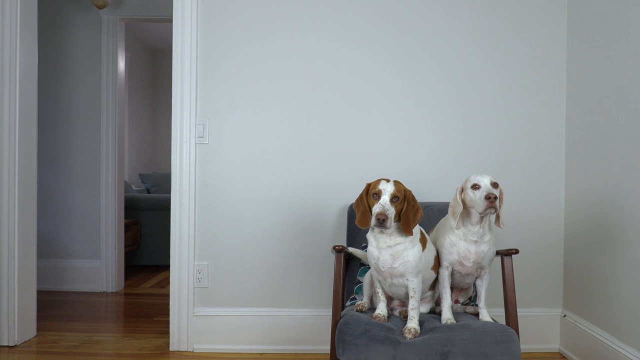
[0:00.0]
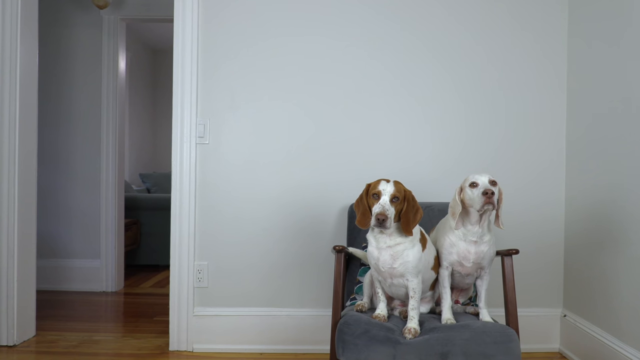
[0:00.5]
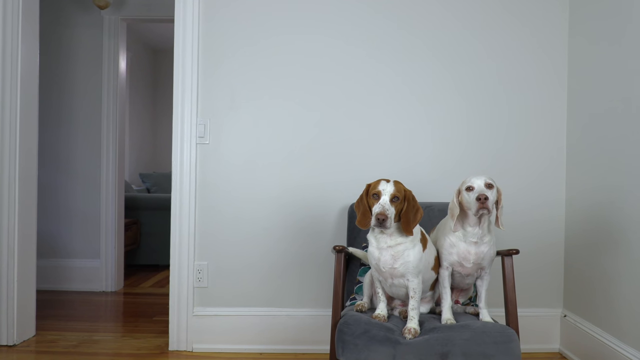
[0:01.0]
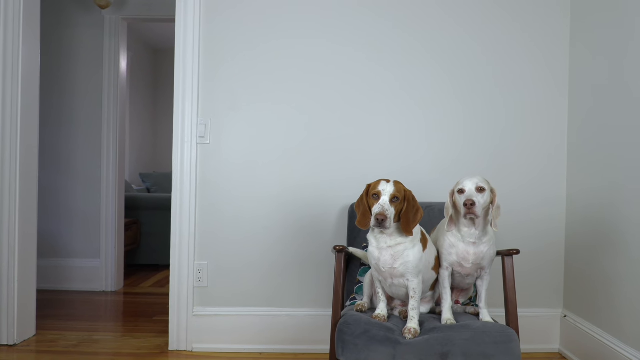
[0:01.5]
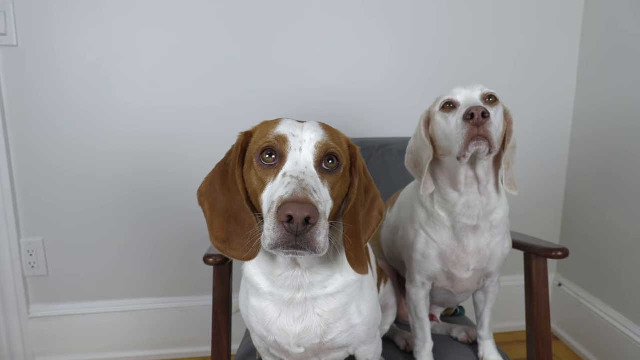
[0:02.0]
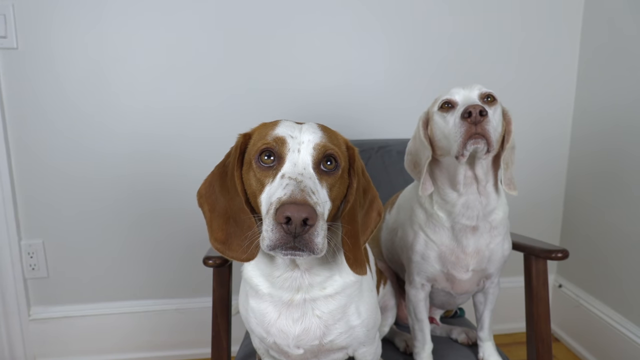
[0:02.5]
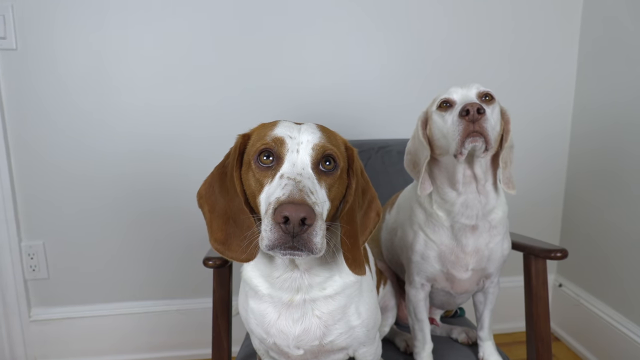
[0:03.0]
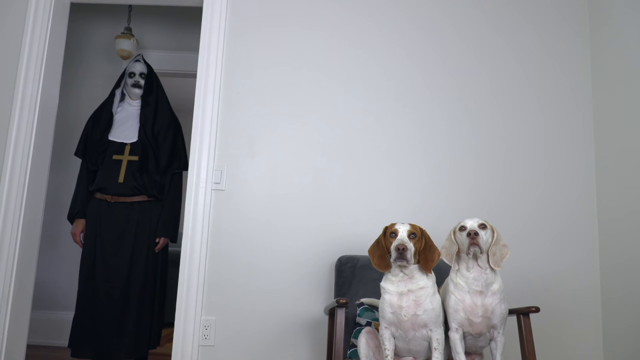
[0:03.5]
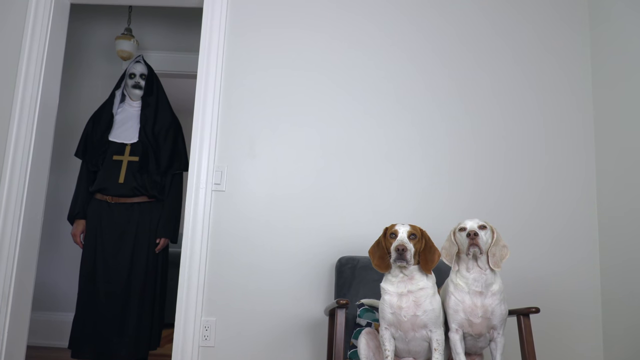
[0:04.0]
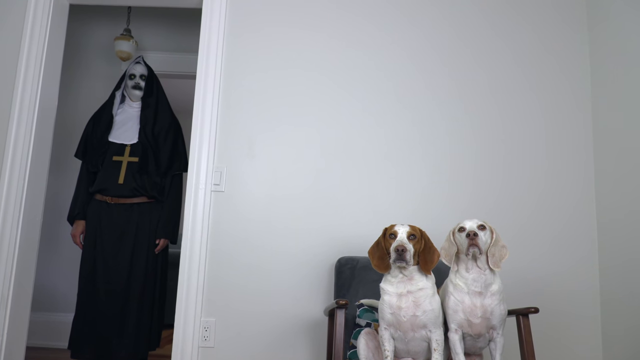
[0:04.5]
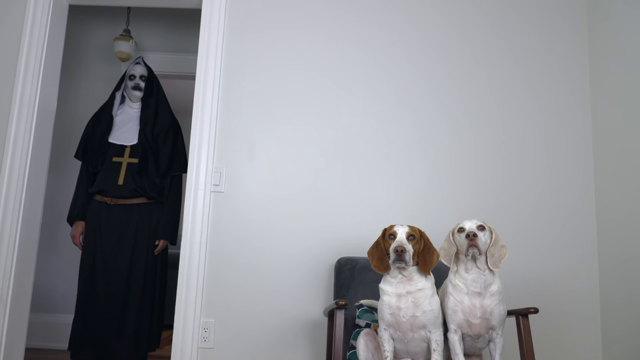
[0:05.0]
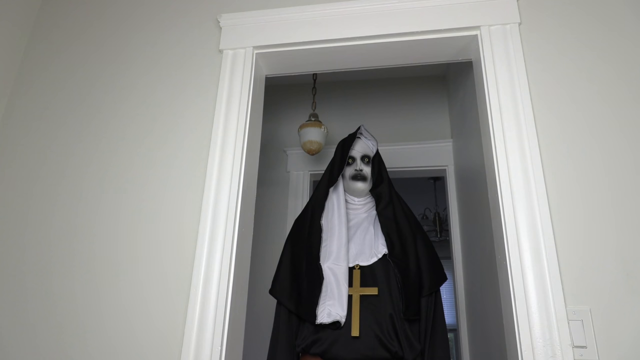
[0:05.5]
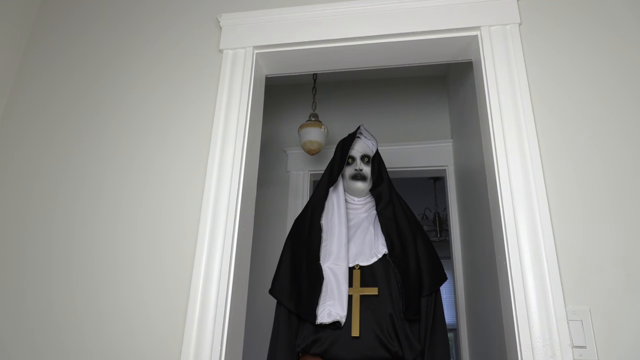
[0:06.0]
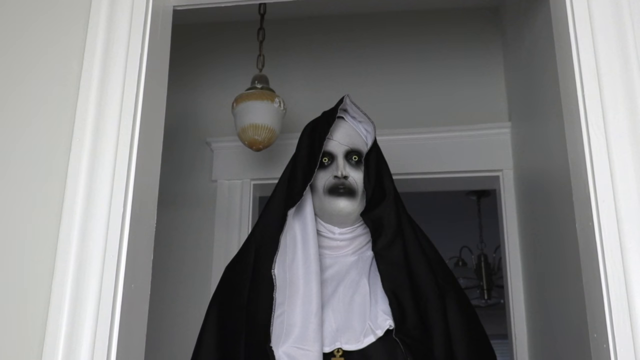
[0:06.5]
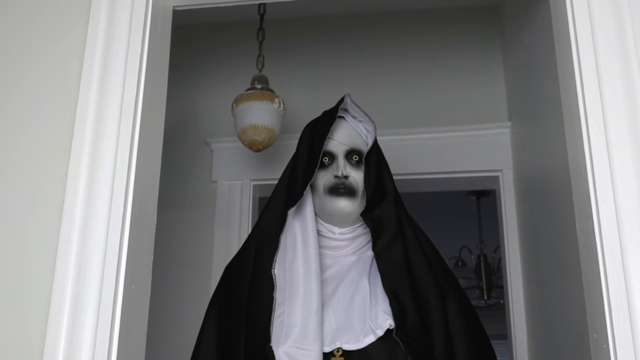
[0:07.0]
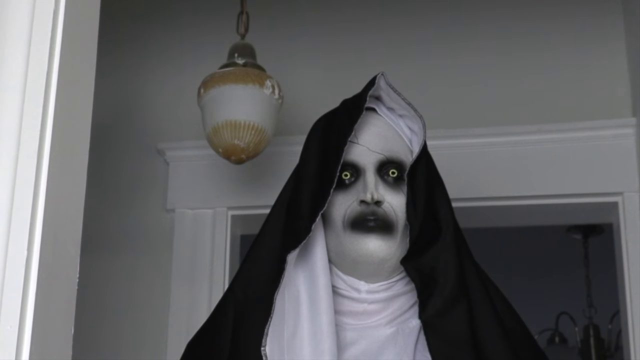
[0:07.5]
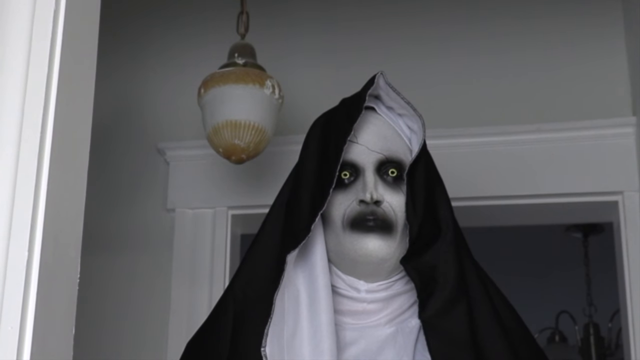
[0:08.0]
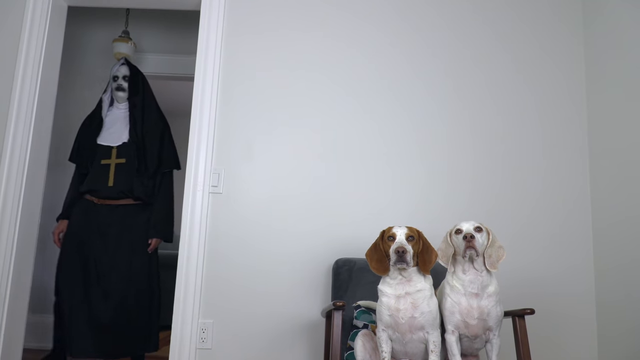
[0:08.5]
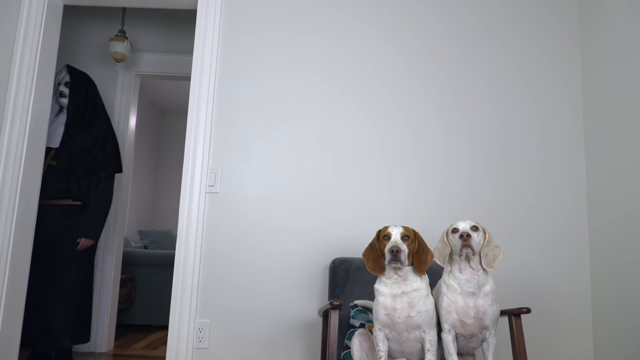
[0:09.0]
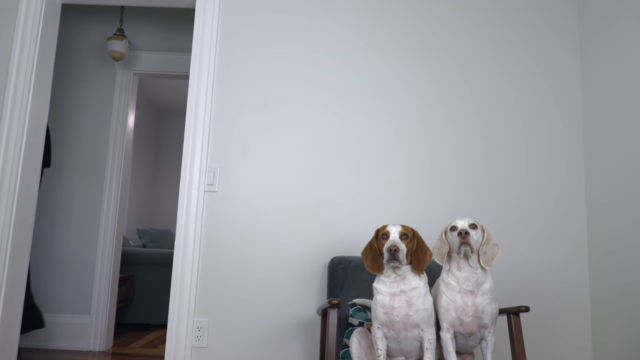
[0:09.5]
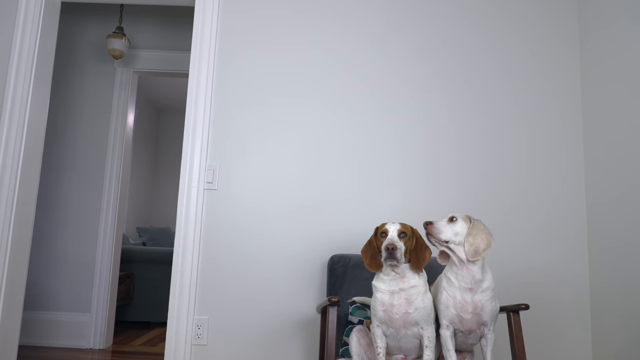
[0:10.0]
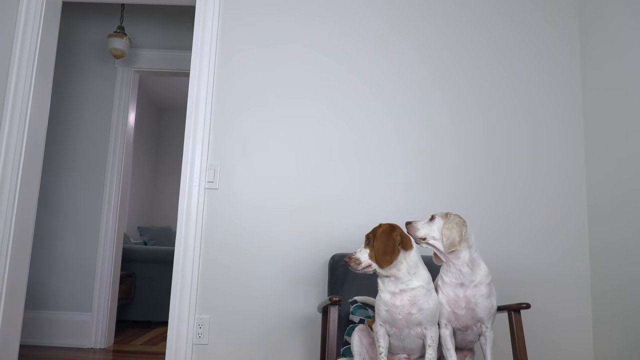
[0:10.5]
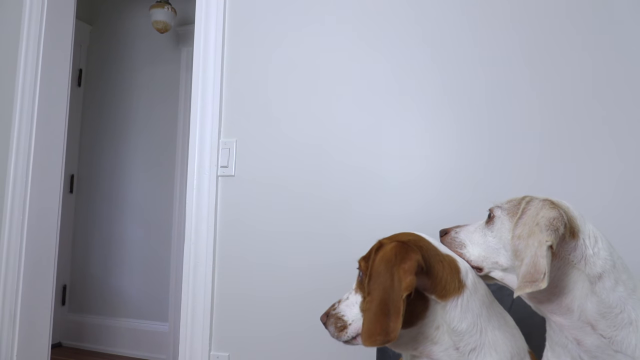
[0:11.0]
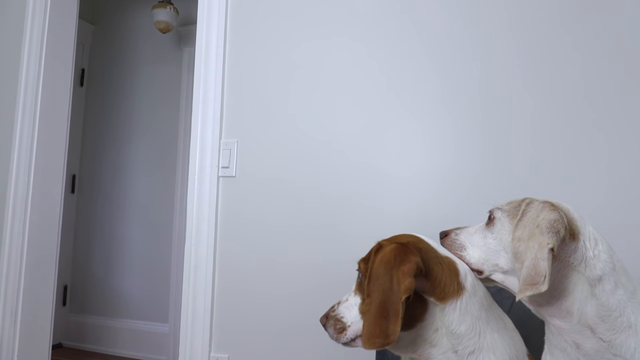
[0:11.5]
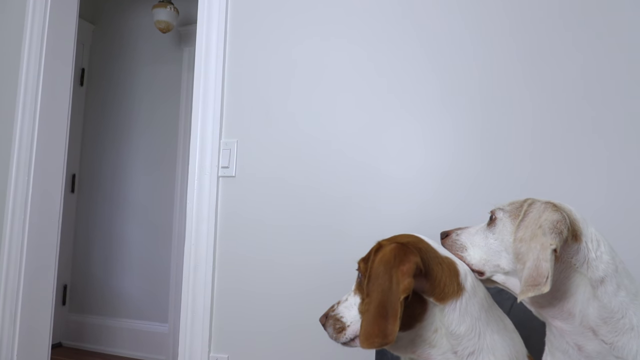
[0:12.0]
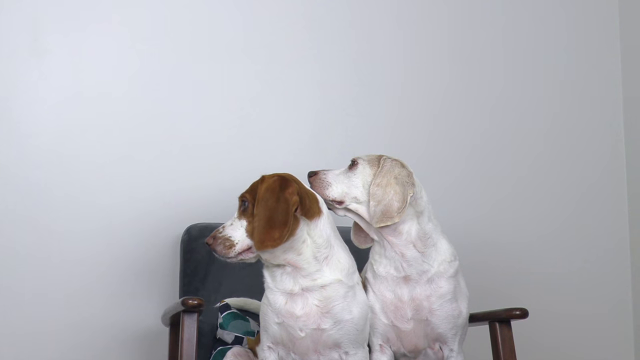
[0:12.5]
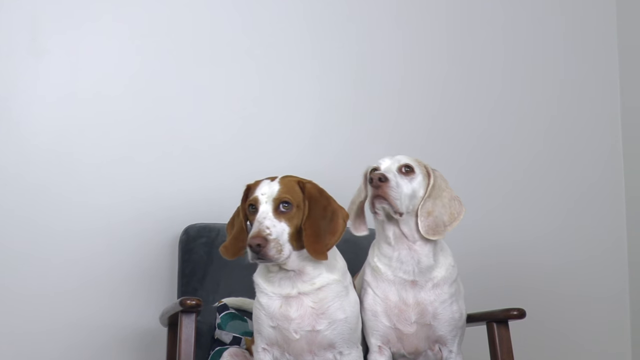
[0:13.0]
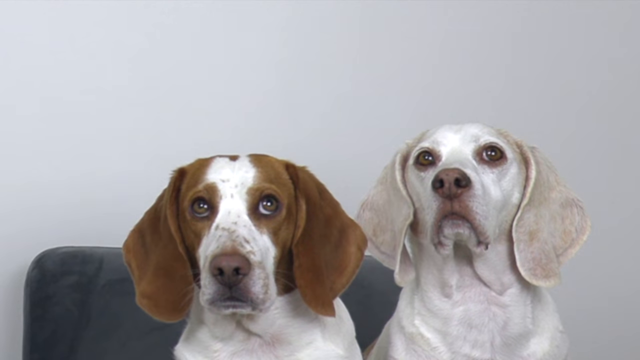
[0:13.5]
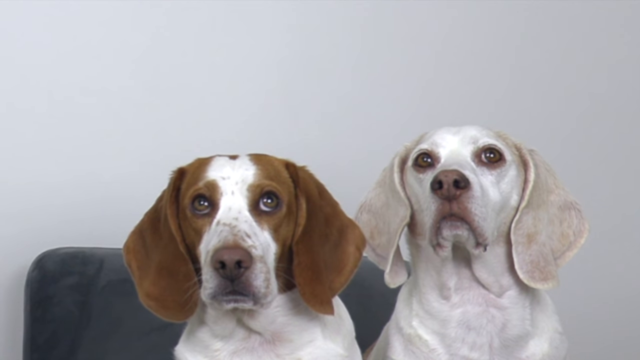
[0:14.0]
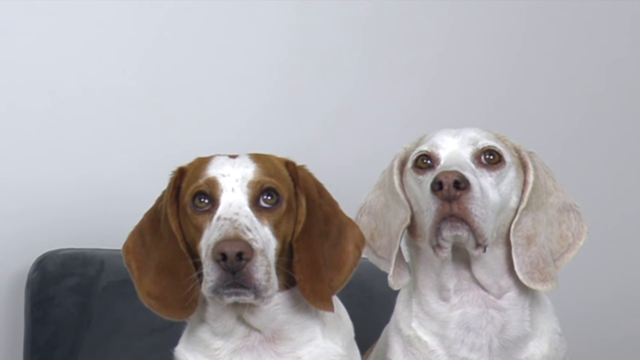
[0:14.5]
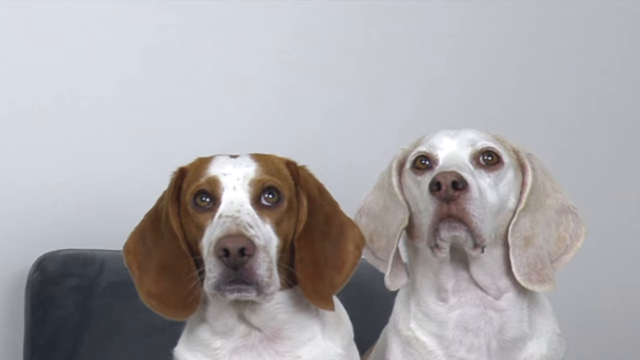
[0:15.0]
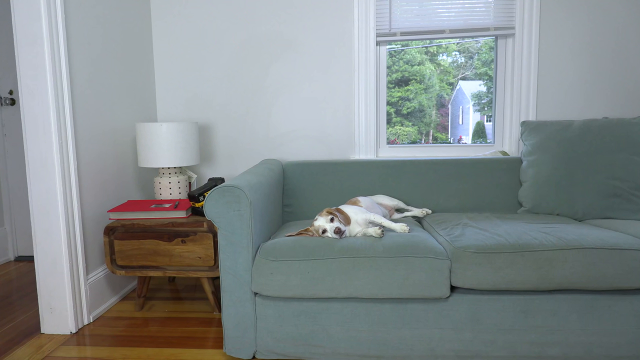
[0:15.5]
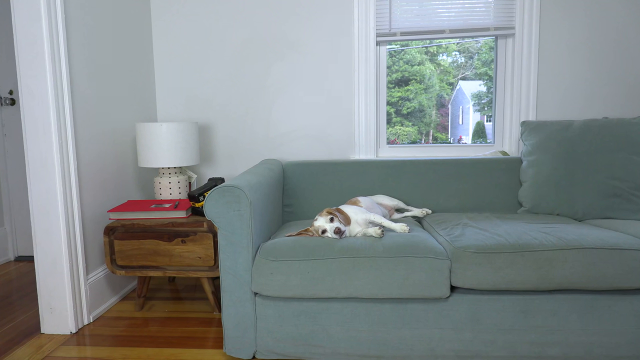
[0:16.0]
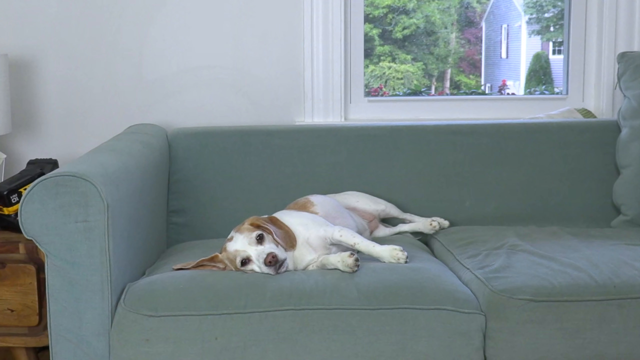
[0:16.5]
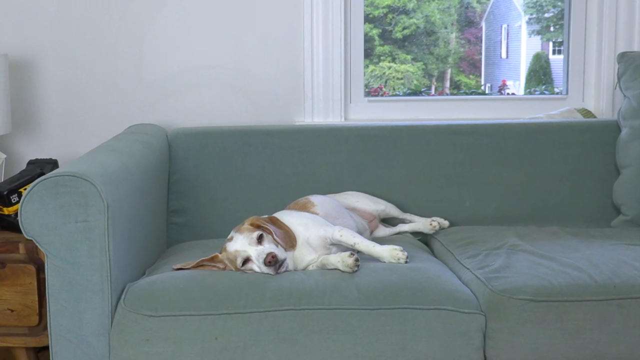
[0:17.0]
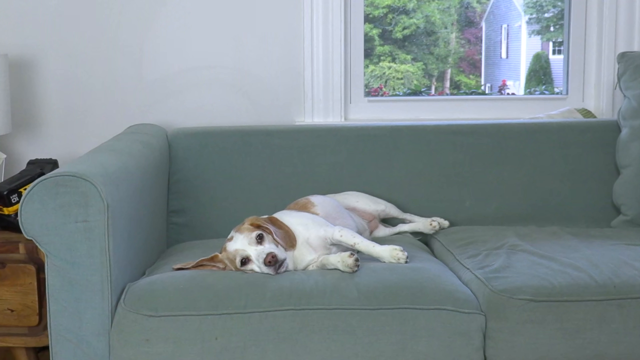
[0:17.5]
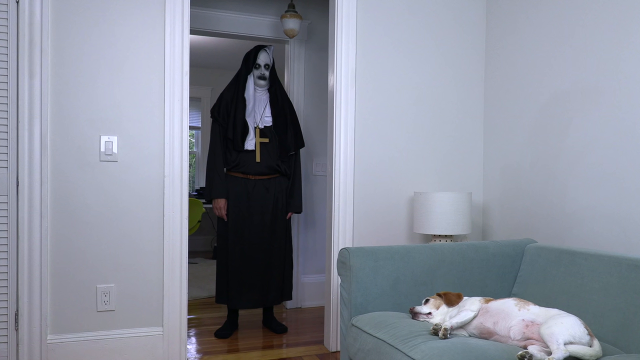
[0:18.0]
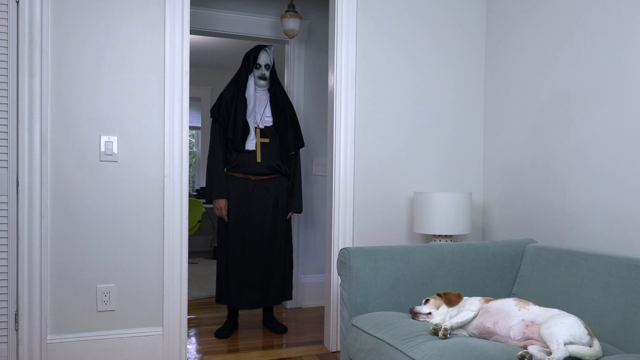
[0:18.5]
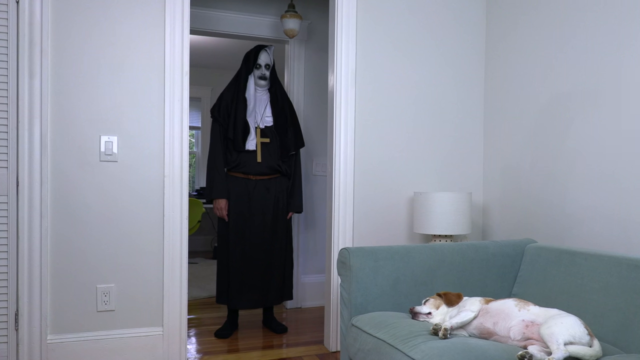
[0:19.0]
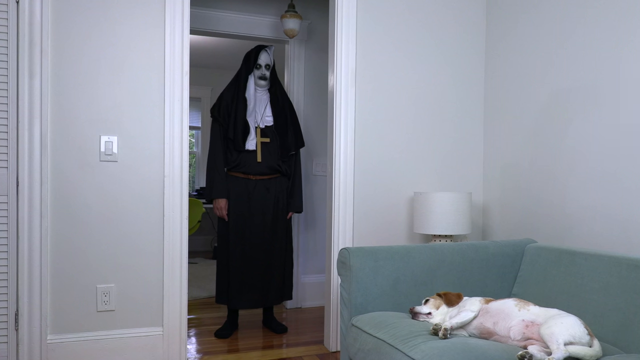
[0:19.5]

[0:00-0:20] What looks to be a comedy video opens on two dogs sitting on a blue chair in front of a very light grey wall. One is white with brown spots, brown ears and brown face details, with floppy ears; to his right is a fully white dog with similarly floppy ears. A doorway on the left is empty. Shortly after, a person in a very creepy costume appears: a white and black mask and a black and white nun outfit with a gold cross. When the shot goes back to the dogs, they look over, but the person has been removed from the frame. Then one of the dogs, the one with brown ears, is lying alone on his side on a green sofa.